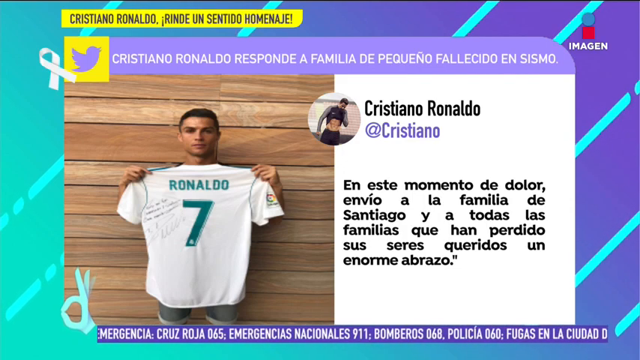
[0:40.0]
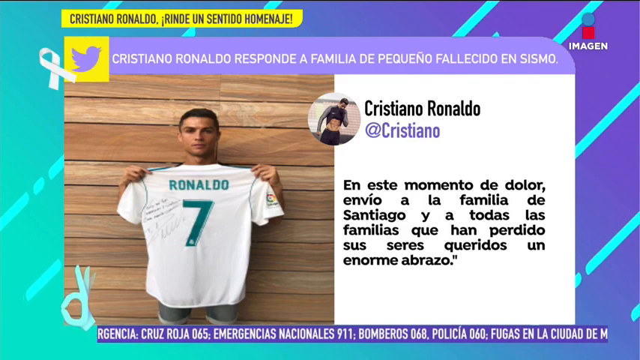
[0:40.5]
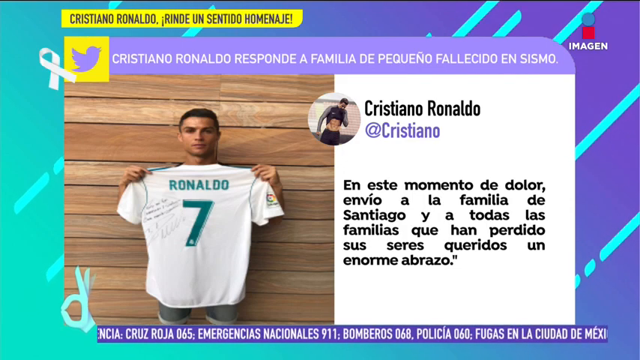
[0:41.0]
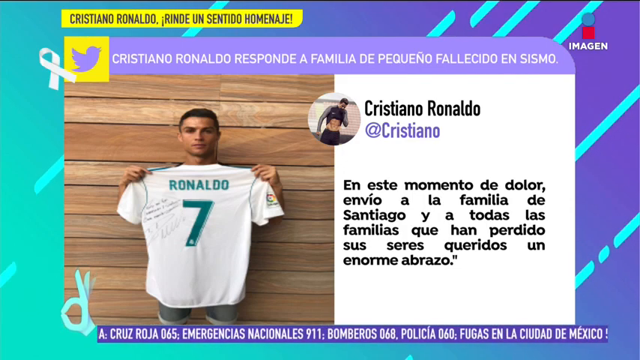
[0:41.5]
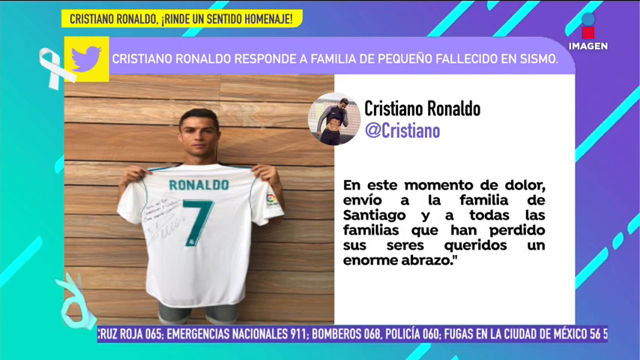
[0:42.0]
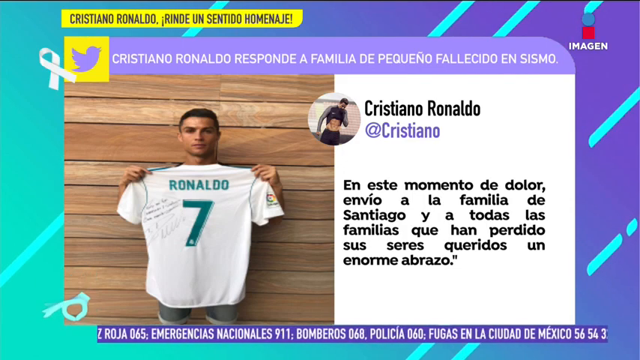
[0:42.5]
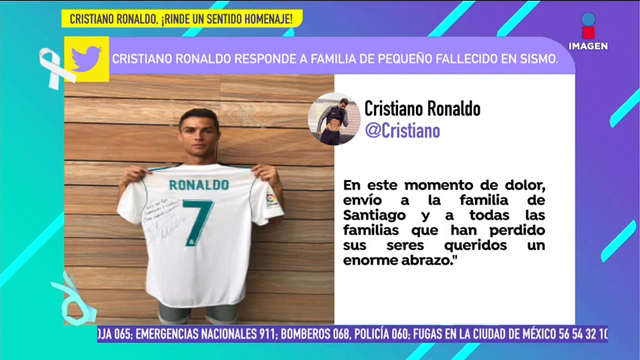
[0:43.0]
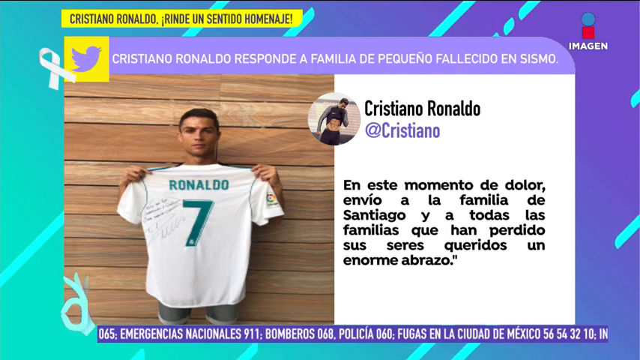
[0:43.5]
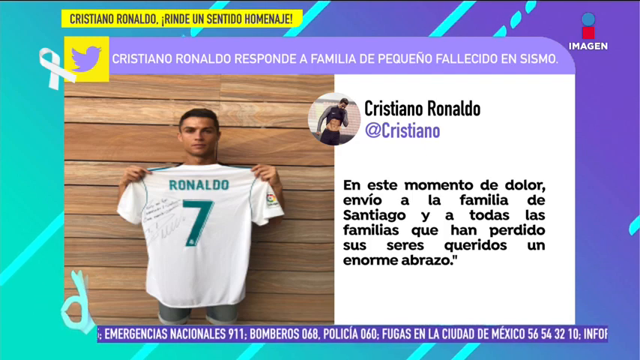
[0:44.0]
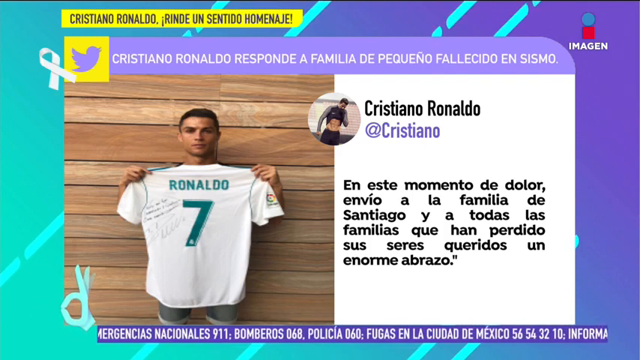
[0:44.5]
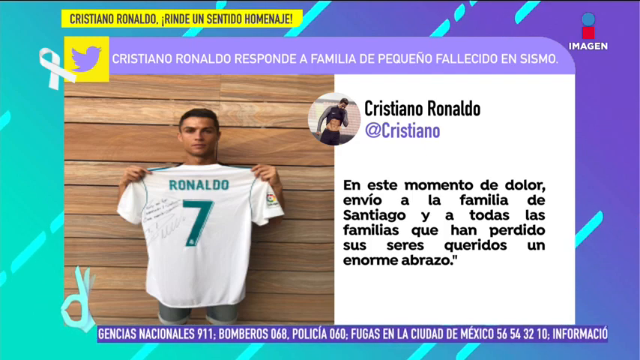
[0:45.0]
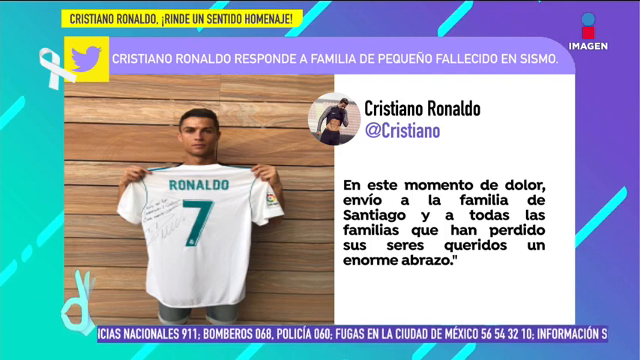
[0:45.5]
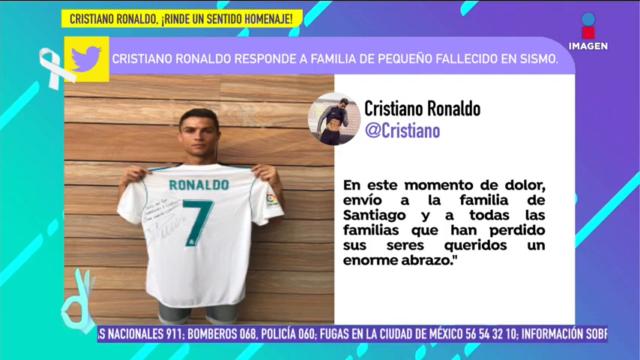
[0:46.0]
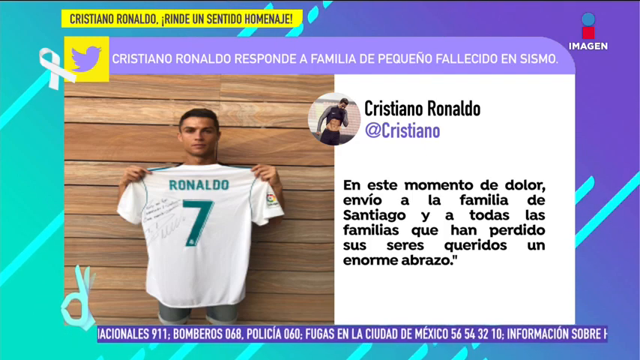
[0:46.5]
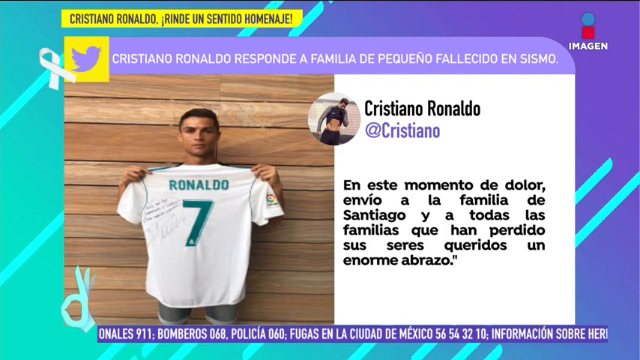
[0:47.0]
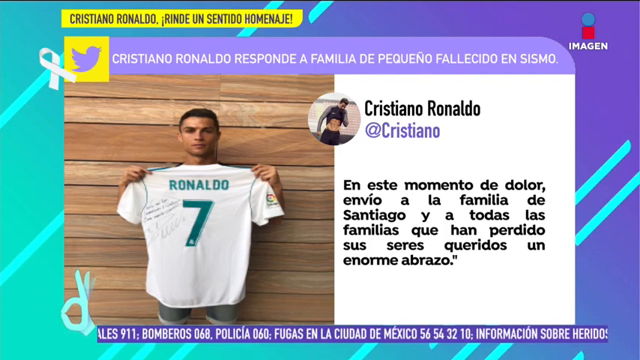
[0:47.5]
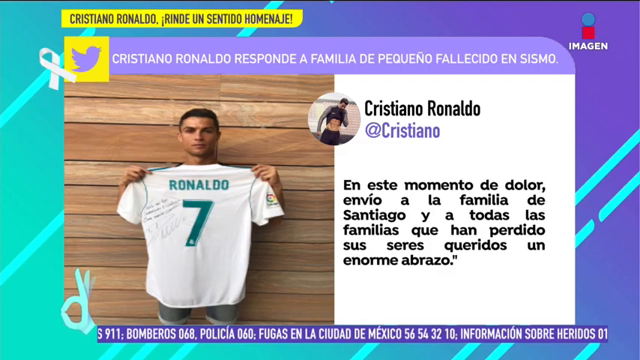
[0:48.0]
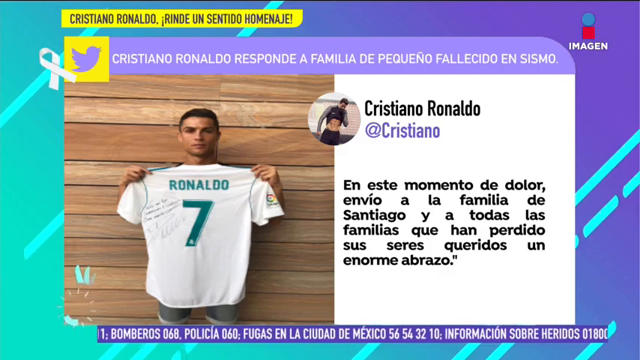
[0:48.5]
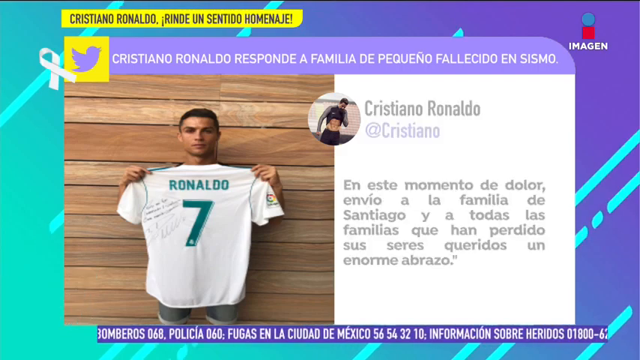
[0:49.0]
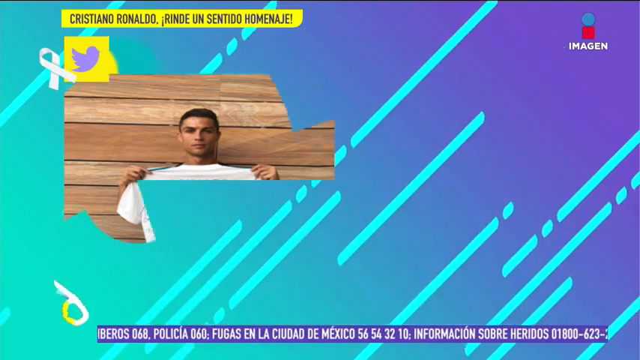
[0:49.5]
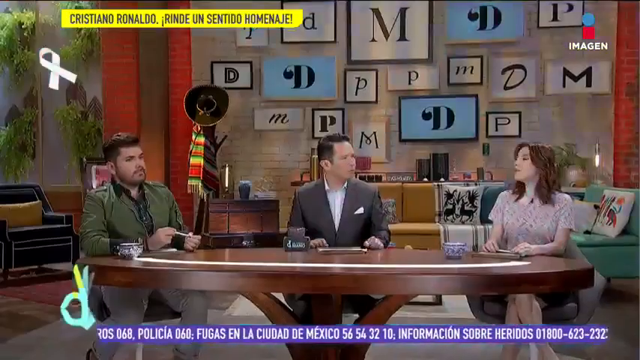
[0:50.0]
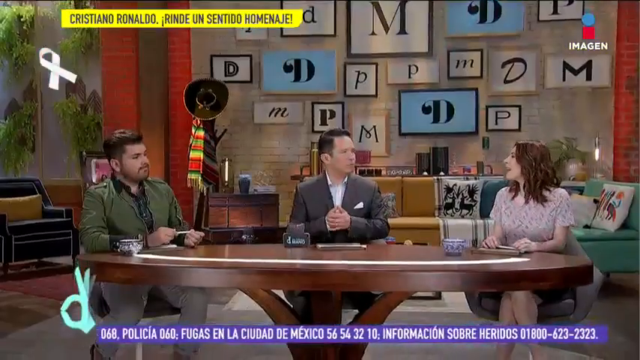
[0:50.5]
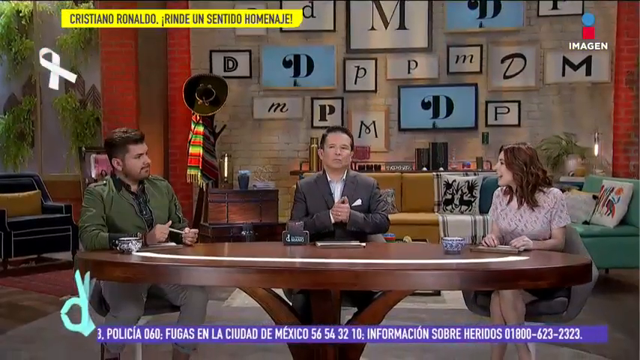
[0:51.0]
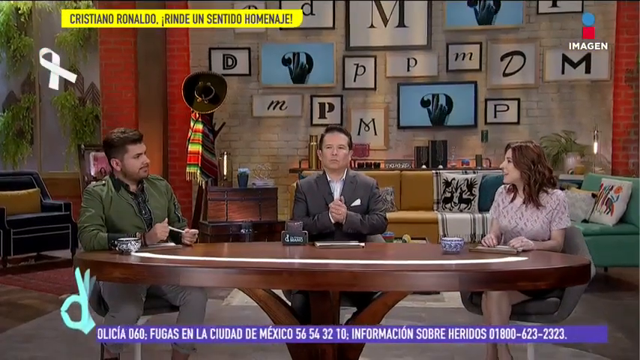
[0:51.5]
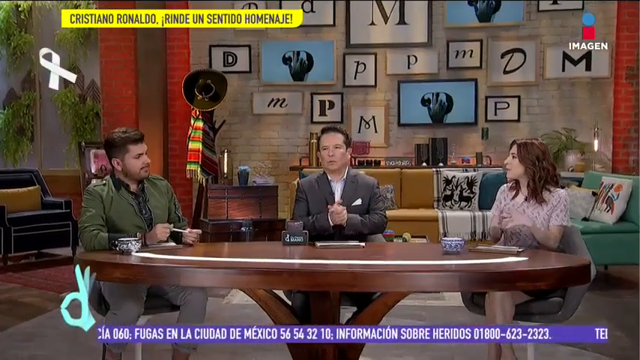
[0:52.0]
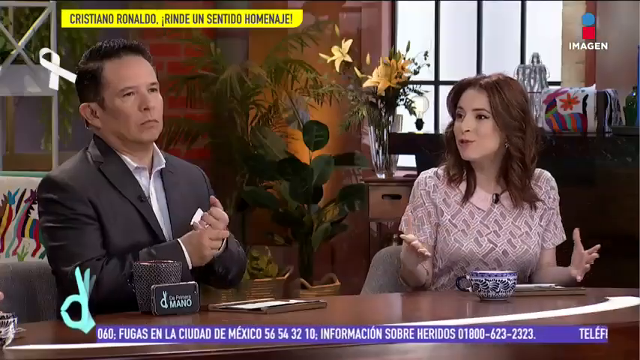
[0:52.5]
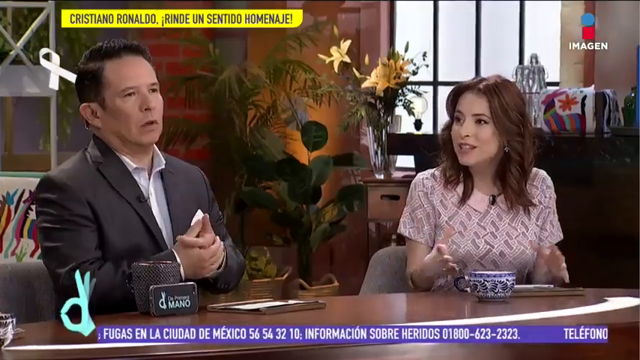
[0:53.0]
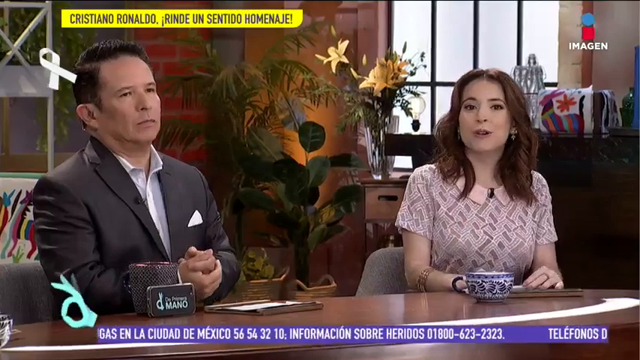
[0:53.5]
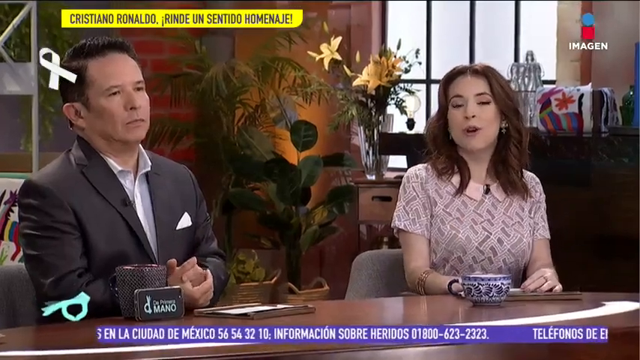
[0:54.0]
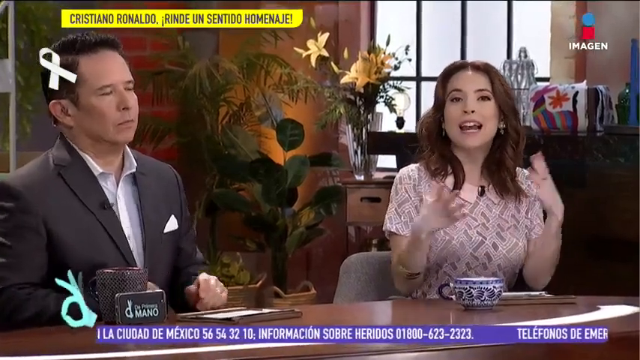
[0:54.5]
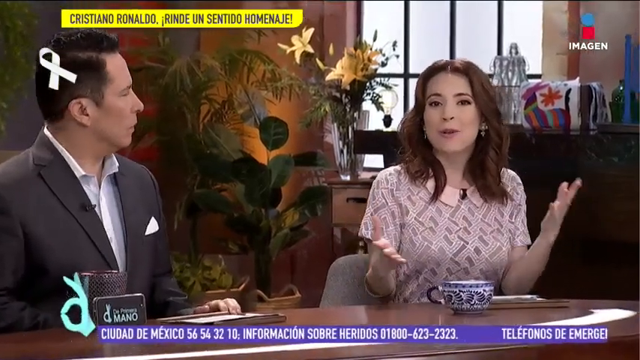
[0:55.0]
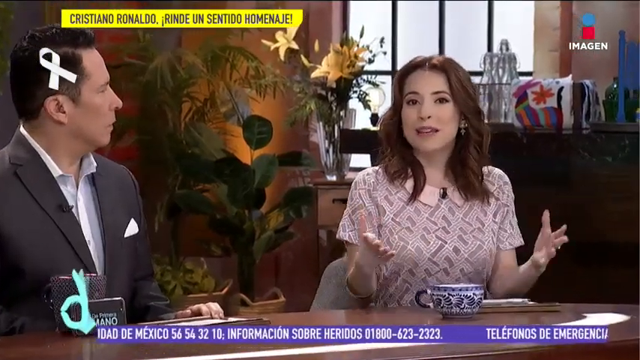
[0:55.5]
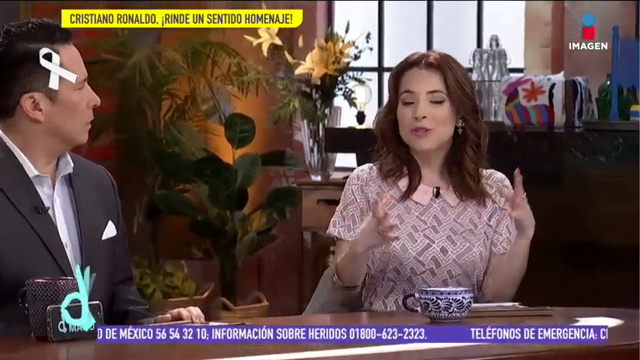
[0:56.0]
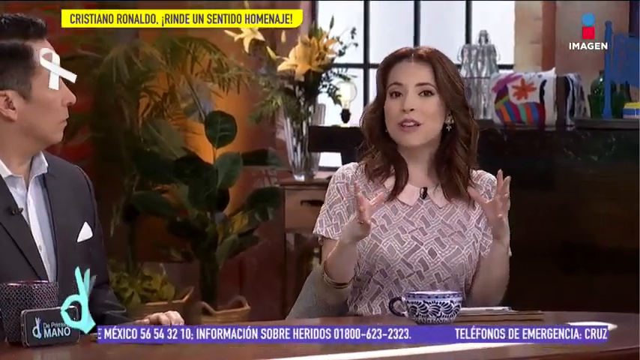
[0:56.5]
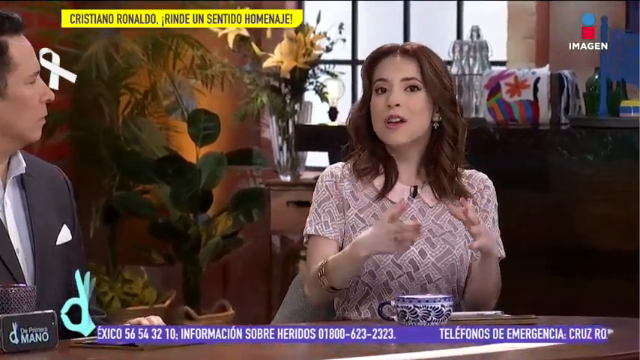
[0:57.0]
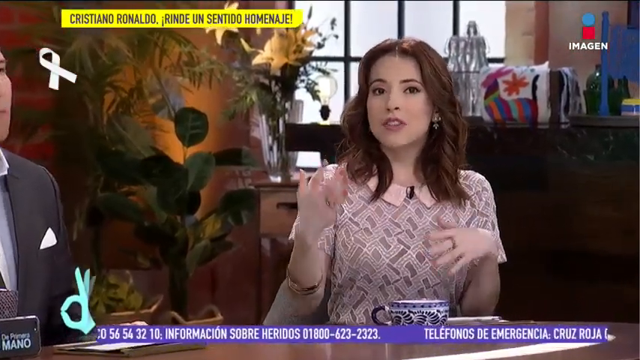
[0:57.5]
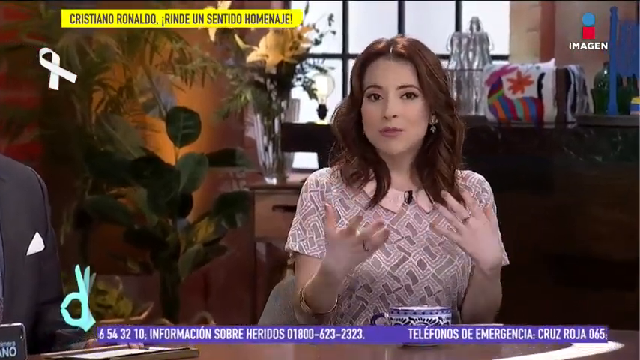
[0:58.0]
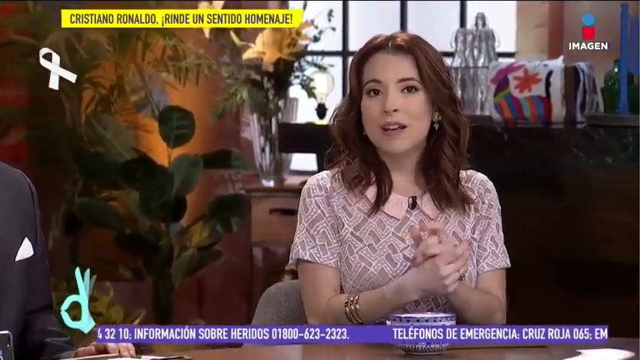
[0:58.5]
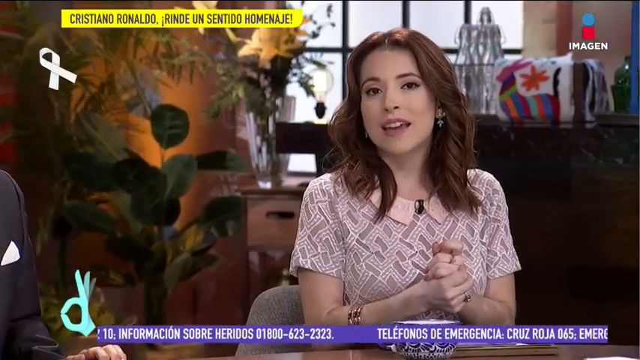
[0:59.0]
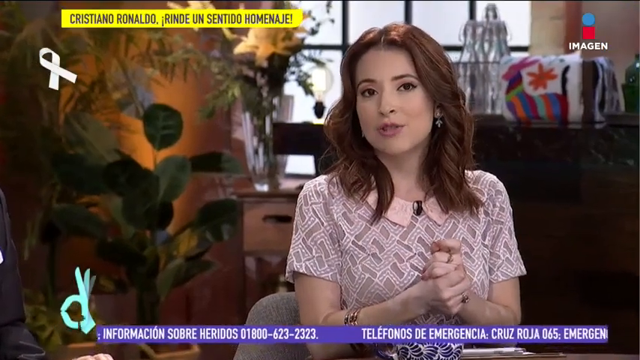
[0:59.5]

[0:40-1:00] The screenshot of the tweet by Cristiano Ronaldo is shown, with text that includes "Todas las familias que han perdido sus seres queridos", apparently in Spanish. In the top right corner is what looks like a logo, and the background is purple with blue stripes. Banners appear at the bottom of the screen showing emergency call information. The video returns to the studio, where the man waves his hands. The camera moves to a shot of the man and the woman, then pans to a solo shot of the woman speaking.